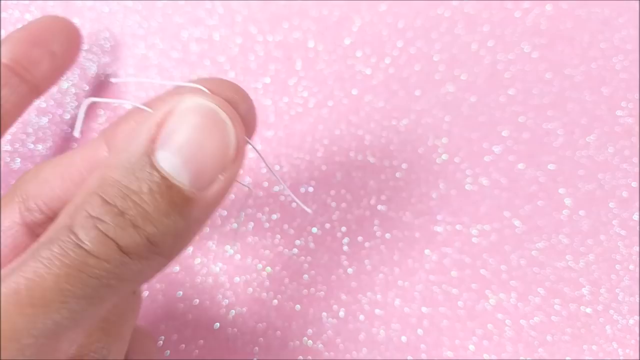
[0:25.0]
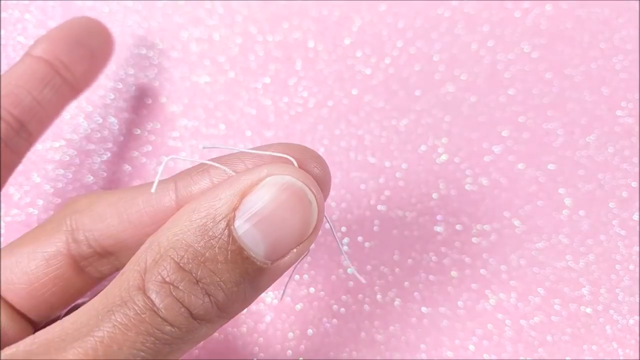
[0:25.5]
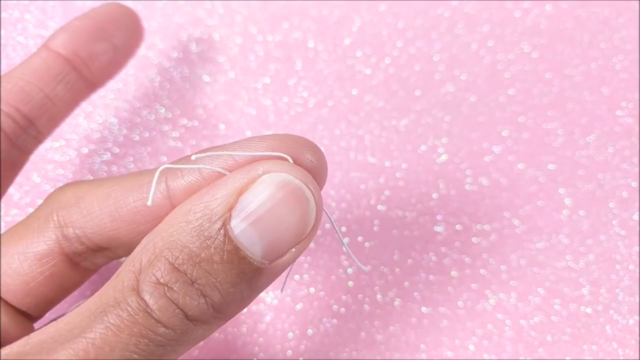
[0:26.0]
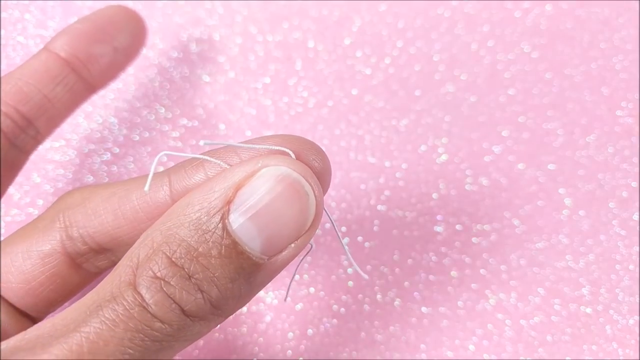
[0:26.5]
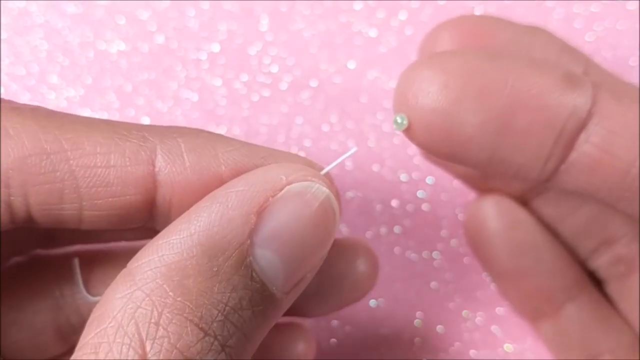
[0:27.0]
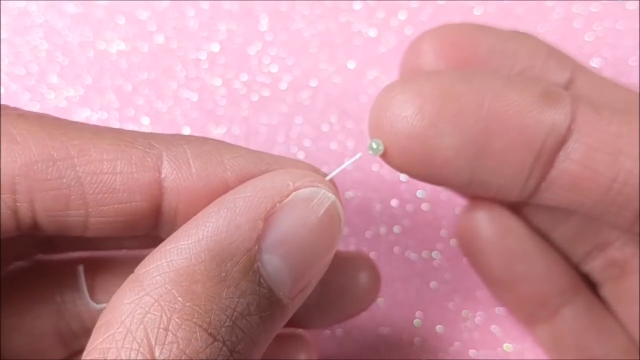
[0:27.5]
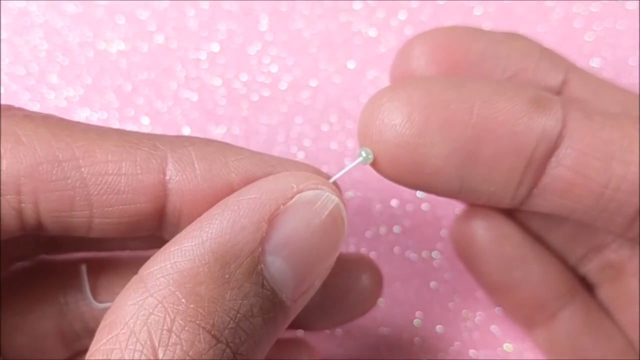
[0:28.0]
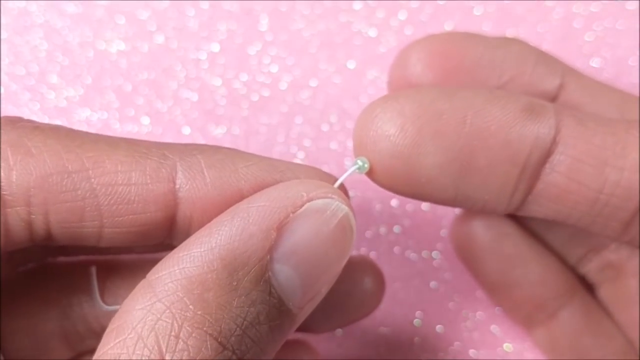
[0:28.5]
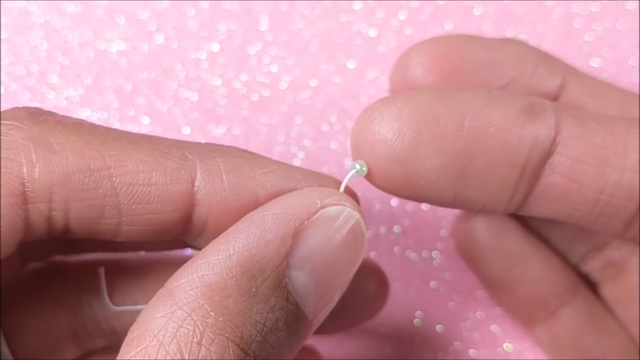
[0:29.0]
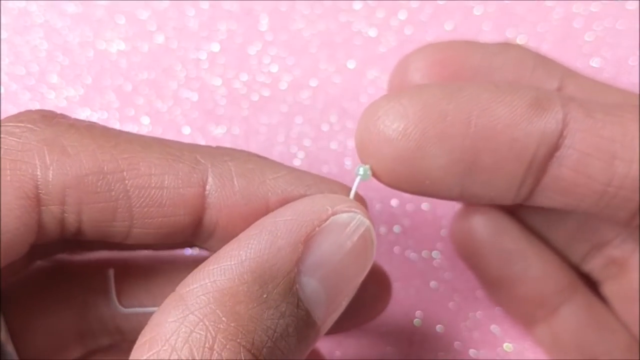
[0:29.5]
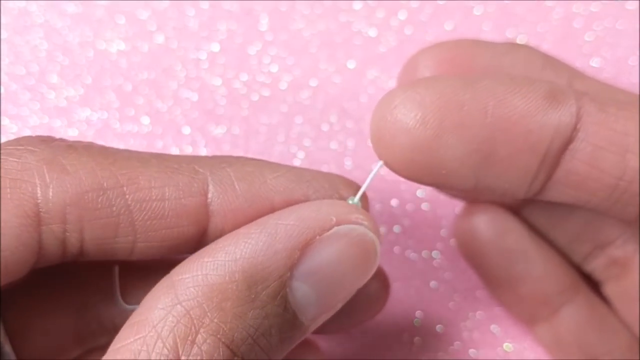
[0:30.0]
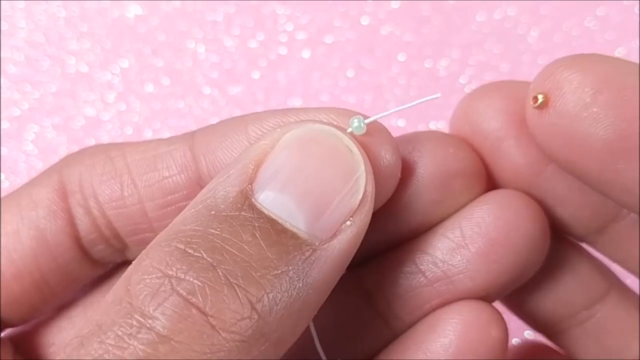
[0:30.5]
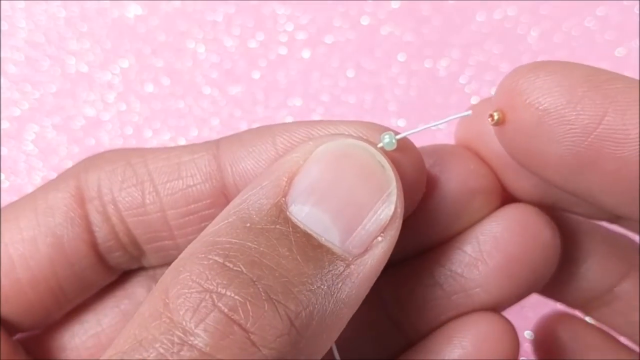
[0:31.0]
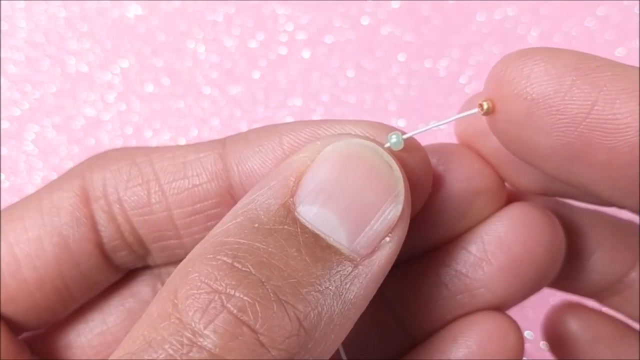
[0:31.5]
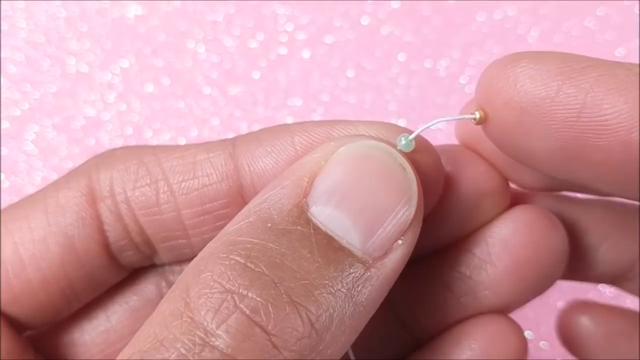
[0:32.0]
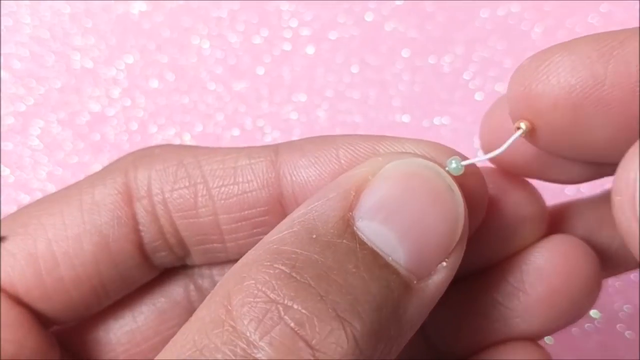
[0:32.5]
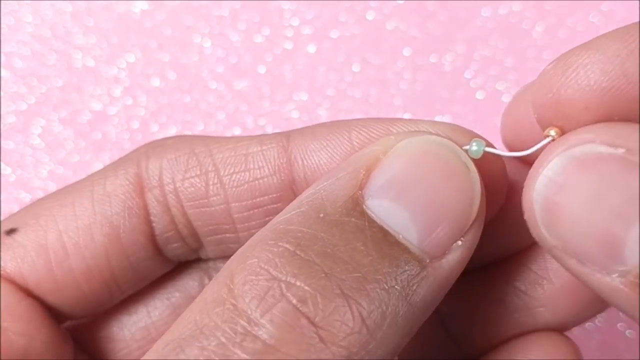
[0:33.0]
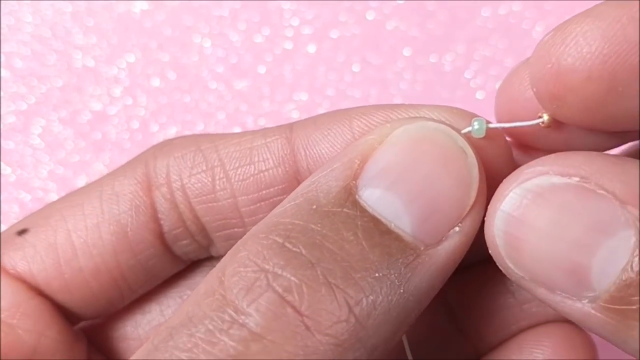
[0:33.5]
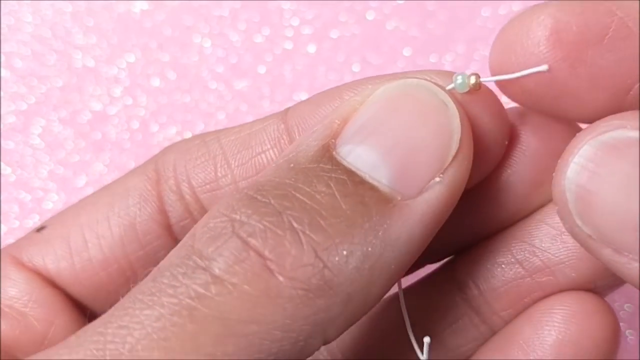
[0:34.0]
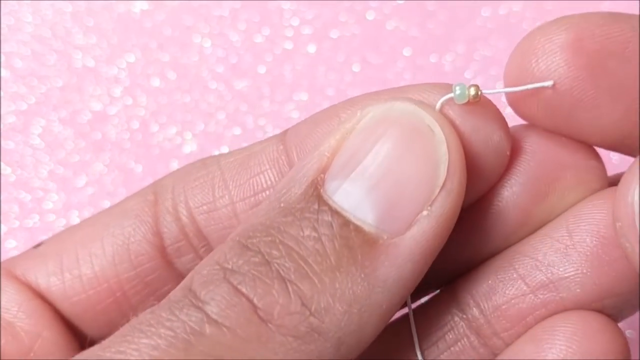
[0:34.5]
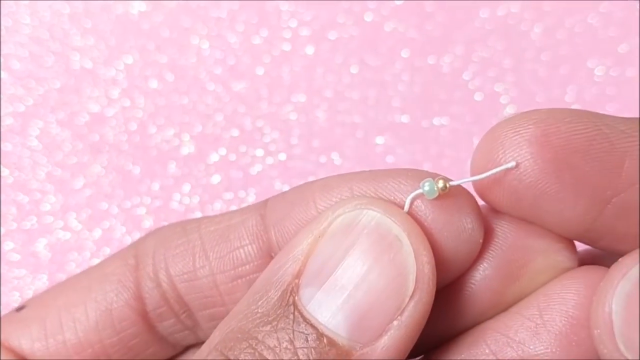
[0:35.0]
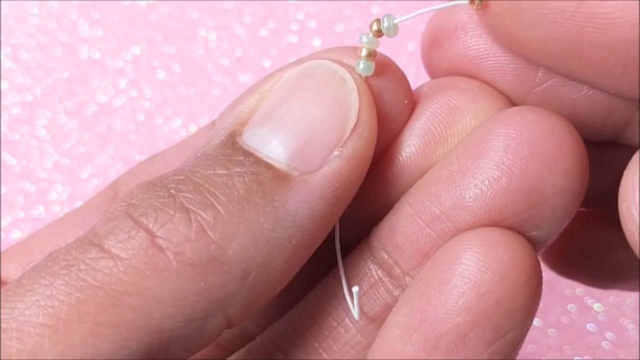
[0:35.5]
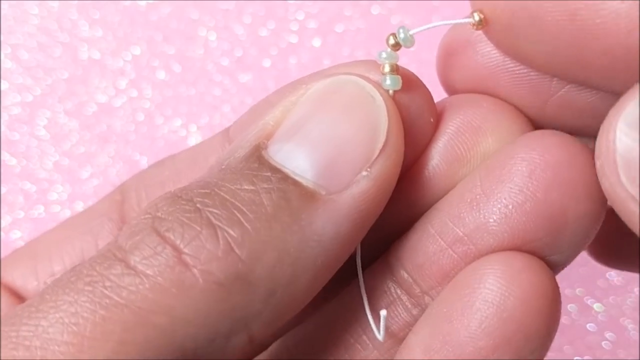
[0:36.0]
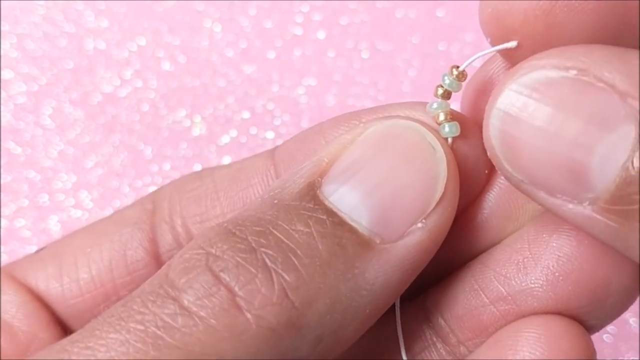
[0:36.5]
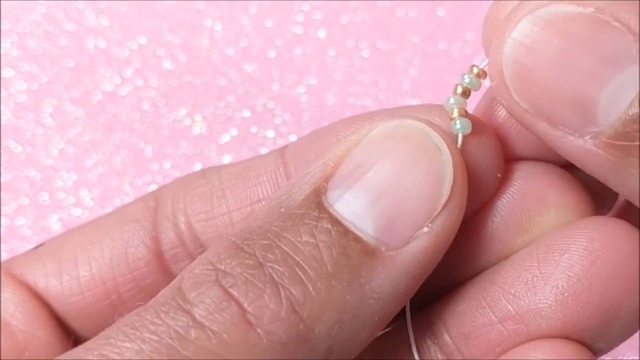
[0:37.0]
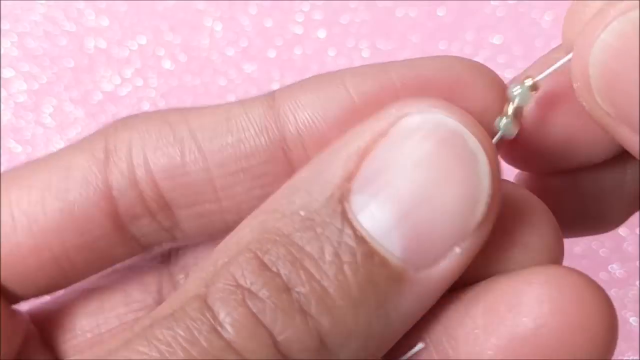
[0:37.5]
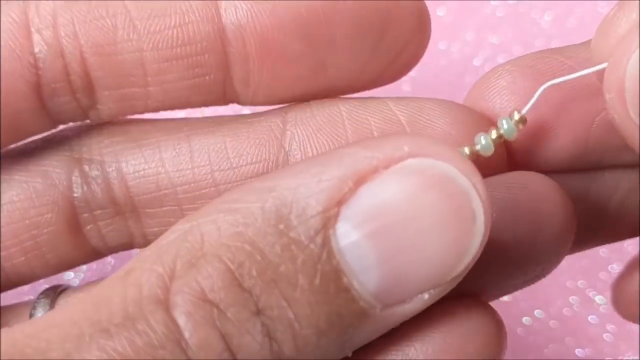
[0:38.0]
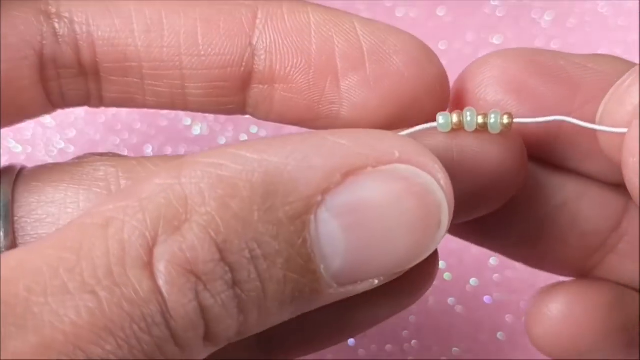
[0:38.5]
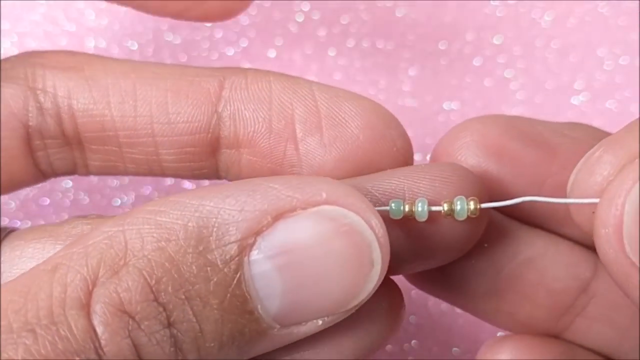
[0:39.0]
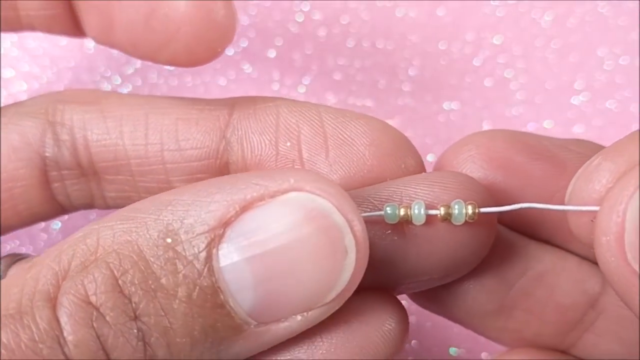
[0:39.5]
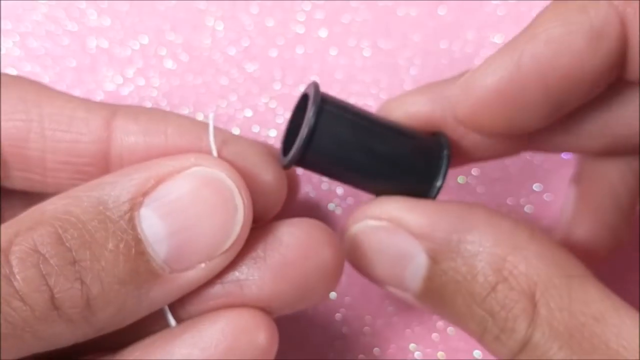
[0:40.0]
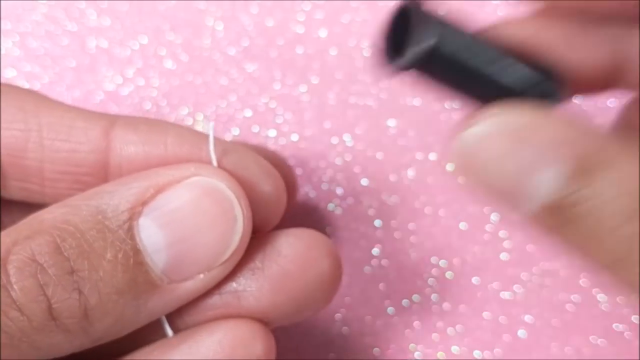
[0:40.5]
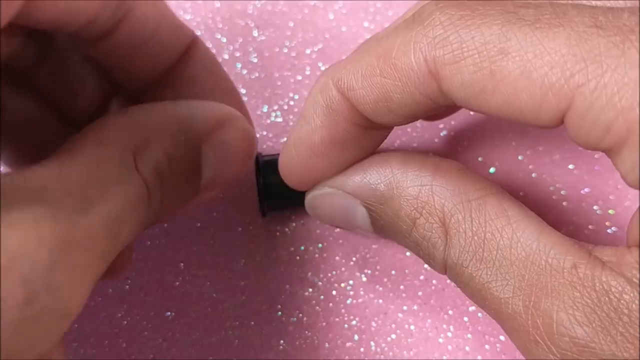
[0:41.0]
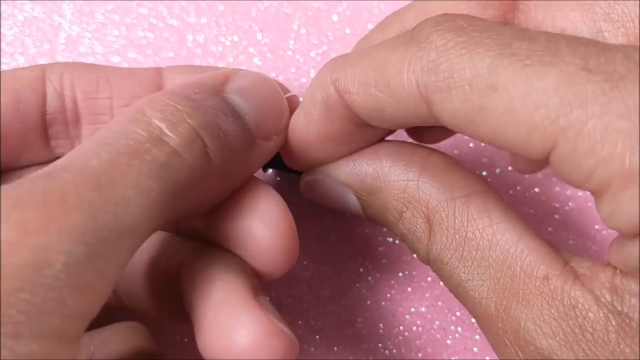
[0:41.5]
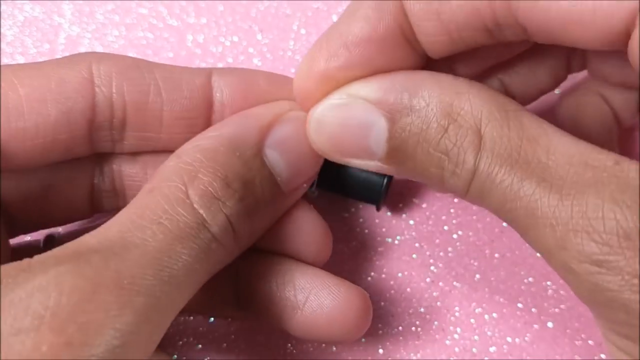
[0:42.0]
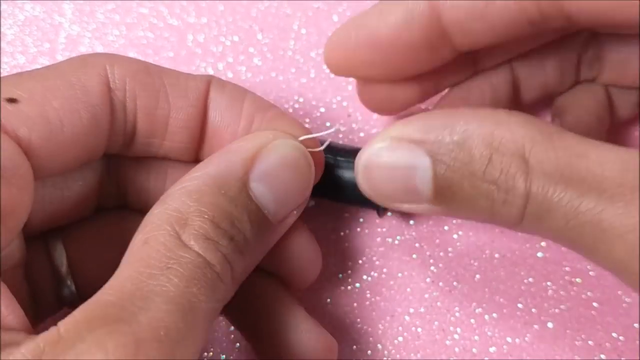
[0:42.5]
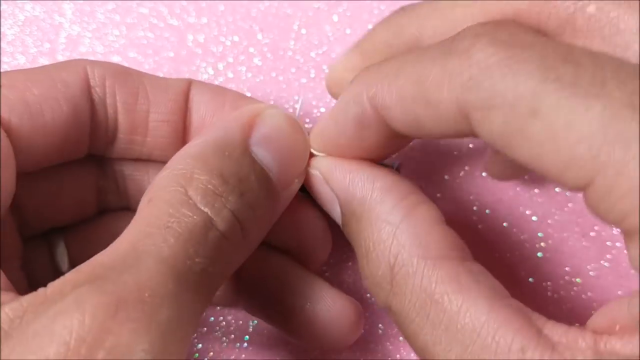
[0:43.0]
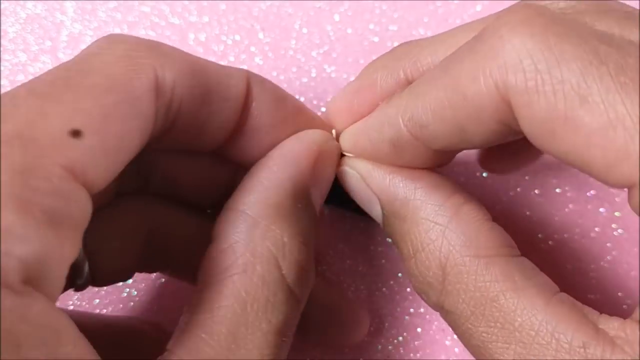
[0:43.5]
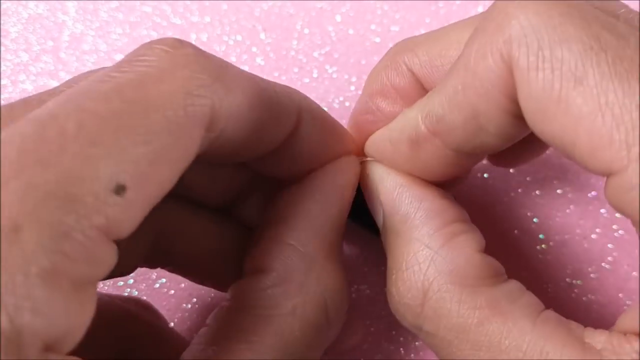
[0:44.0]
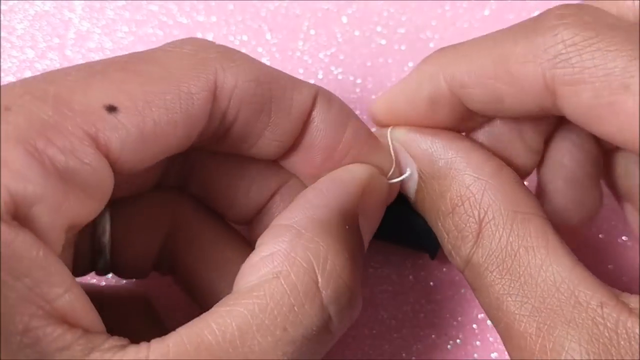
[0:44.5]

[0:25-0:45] The creator makes a sandal with white string, adding tiny beads with holes so they can go onto the string; the beads are smaller than a BB. The first one alternates turquoise or greenish beads with gold beads. Then a black string or a black roller is used, possibly to shape or size the sandal so it fits the Barbie's foot. The hands look to be a female's, apparently a black woman's judging from the fingers; the face is not shown.